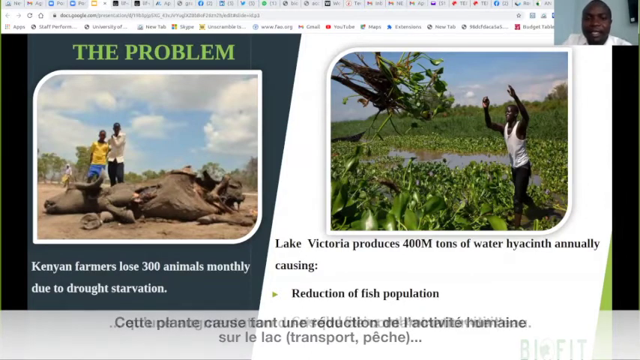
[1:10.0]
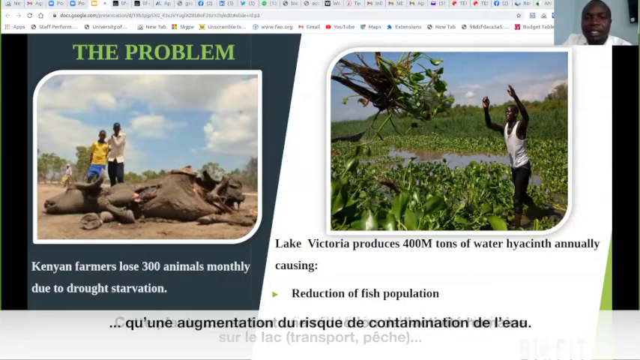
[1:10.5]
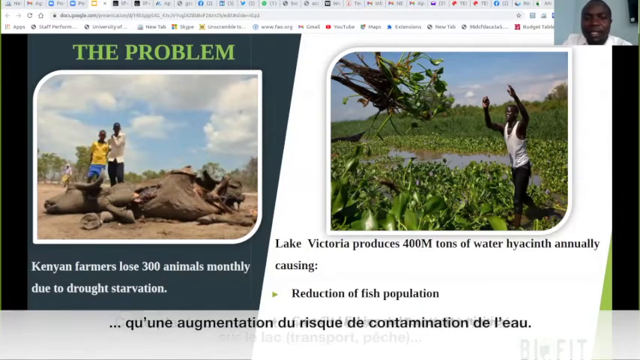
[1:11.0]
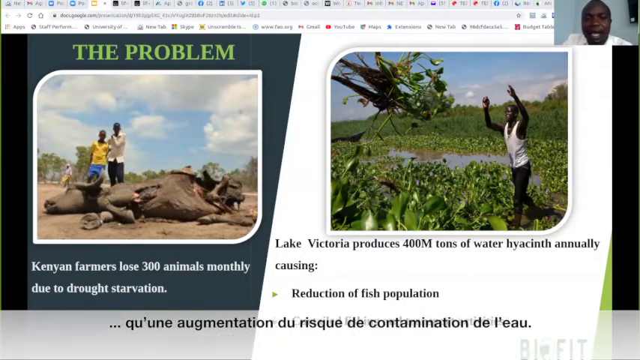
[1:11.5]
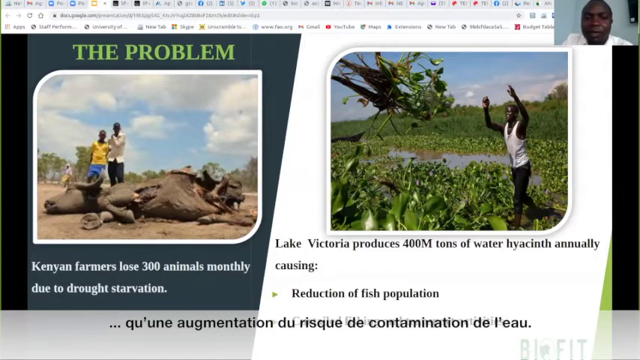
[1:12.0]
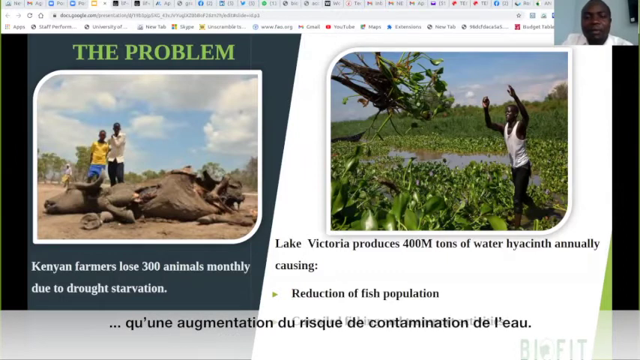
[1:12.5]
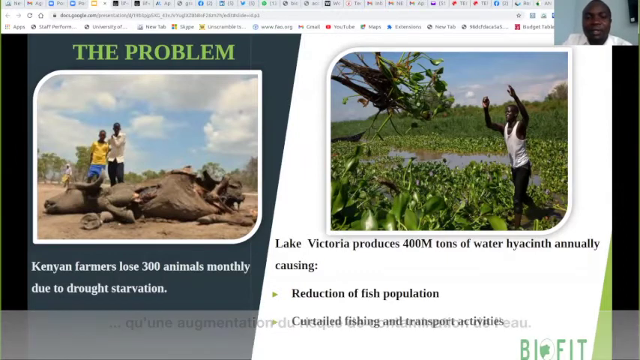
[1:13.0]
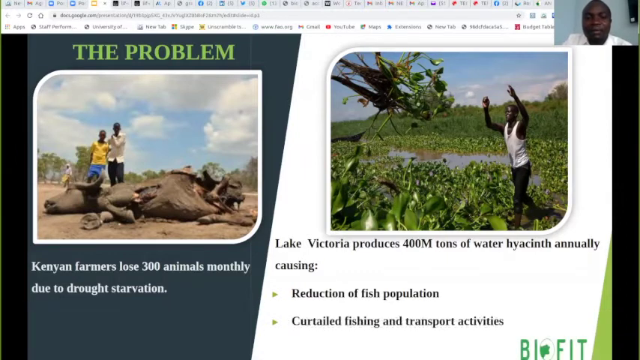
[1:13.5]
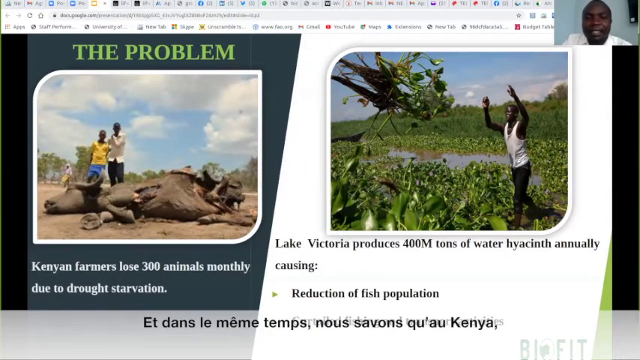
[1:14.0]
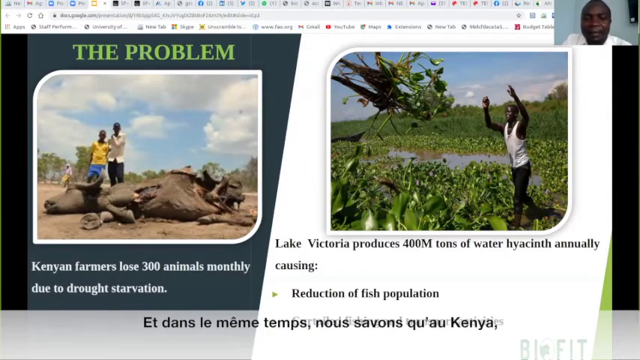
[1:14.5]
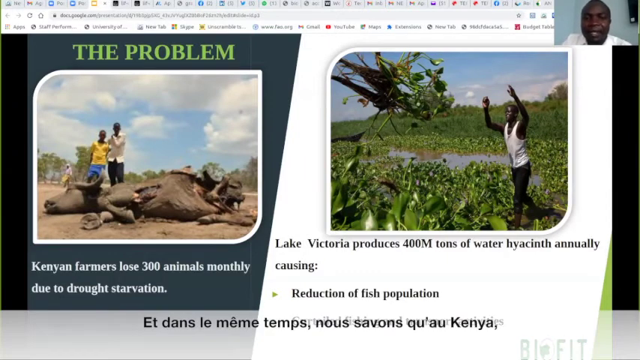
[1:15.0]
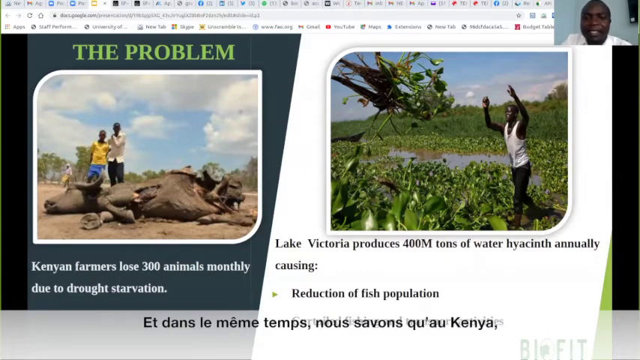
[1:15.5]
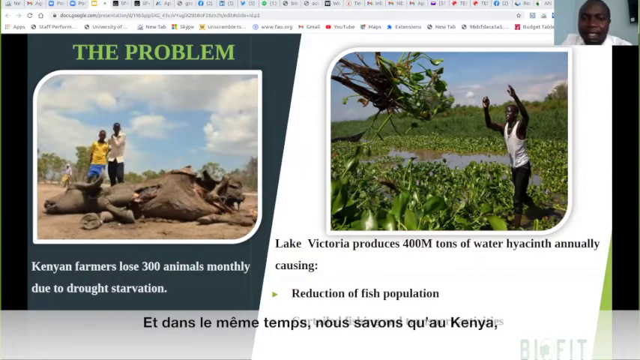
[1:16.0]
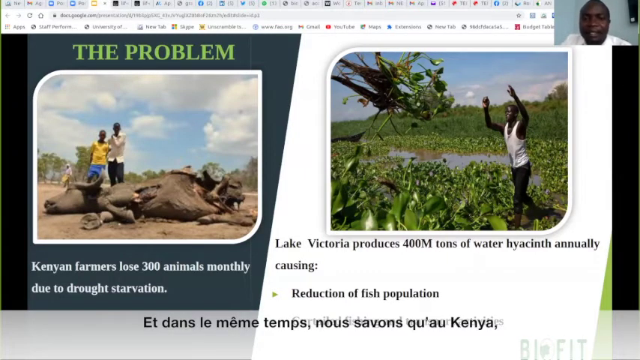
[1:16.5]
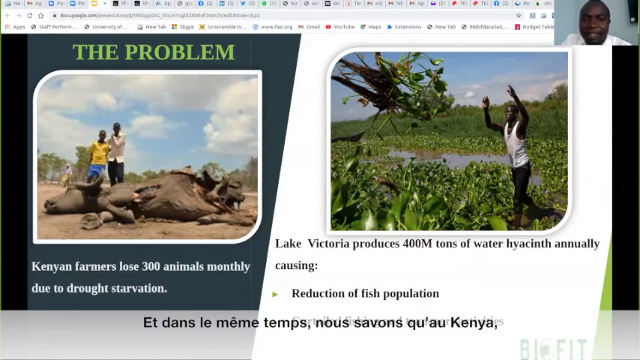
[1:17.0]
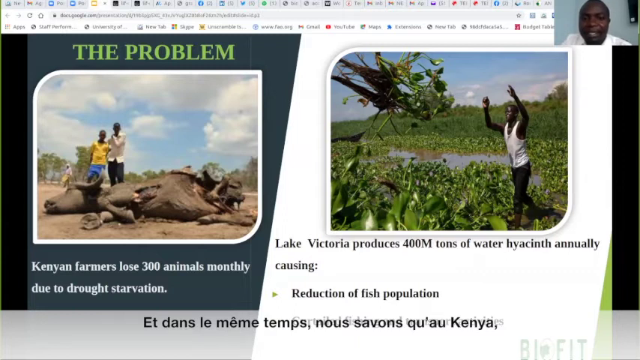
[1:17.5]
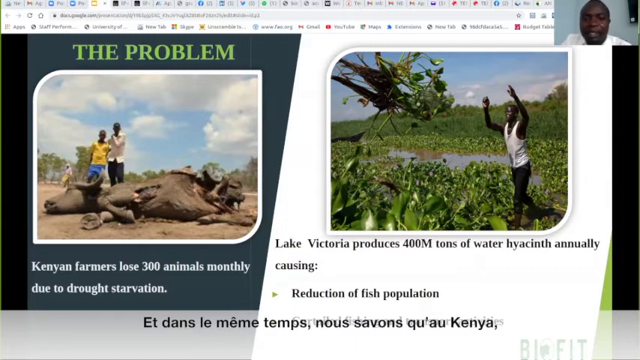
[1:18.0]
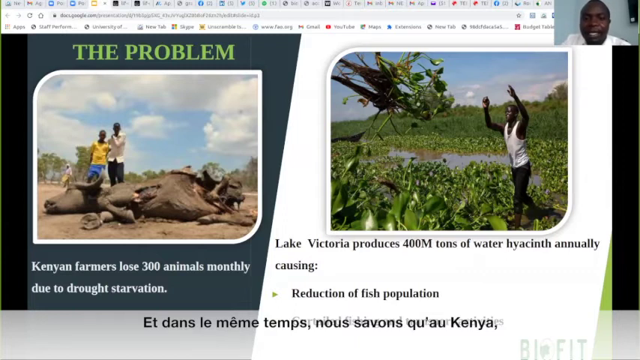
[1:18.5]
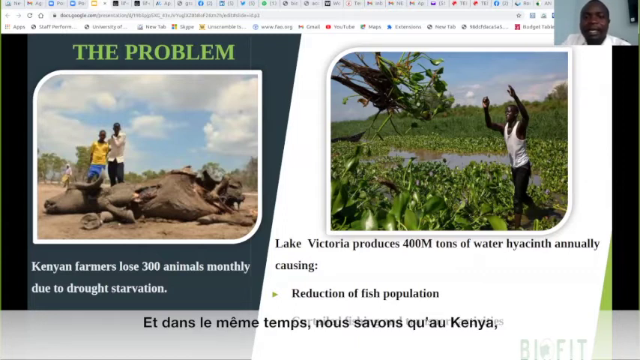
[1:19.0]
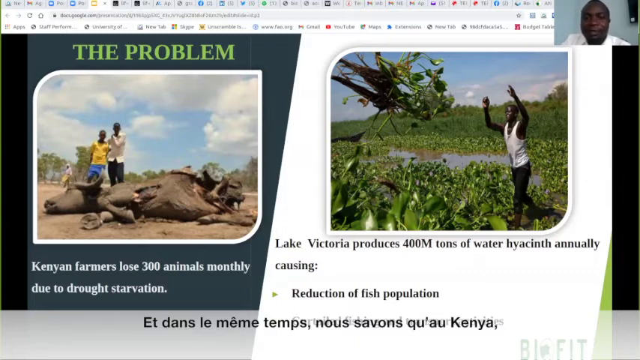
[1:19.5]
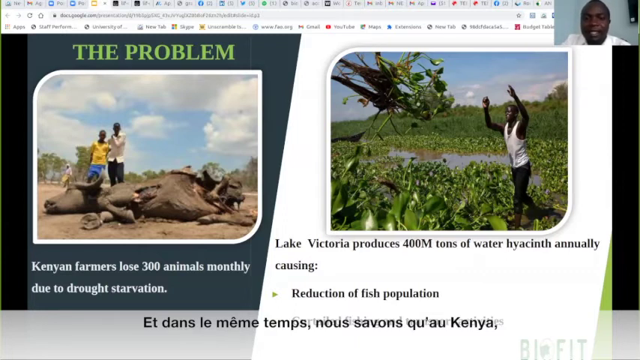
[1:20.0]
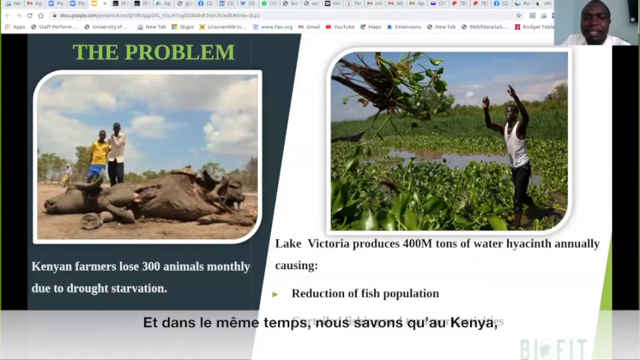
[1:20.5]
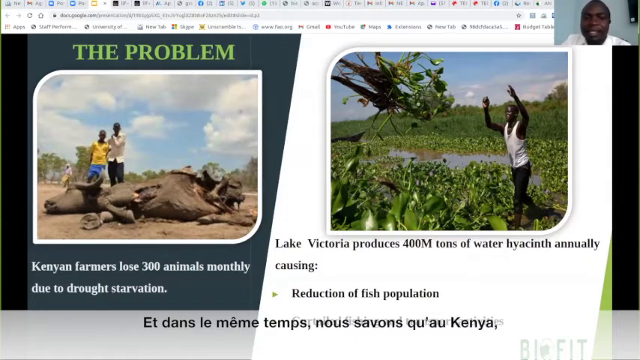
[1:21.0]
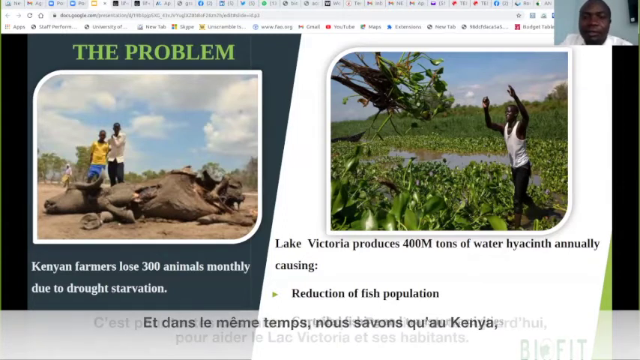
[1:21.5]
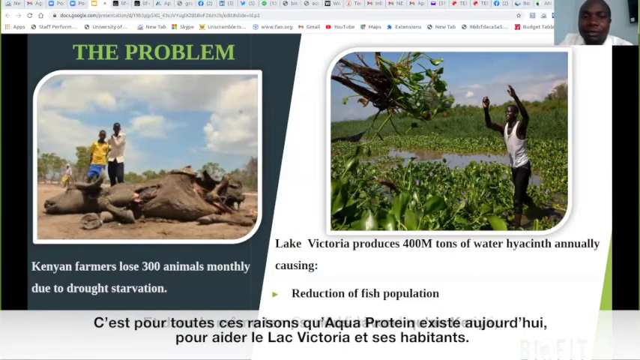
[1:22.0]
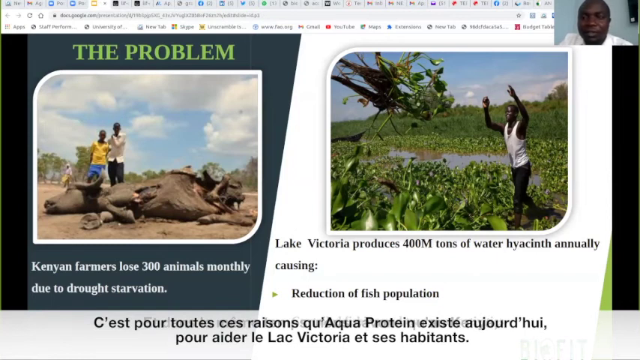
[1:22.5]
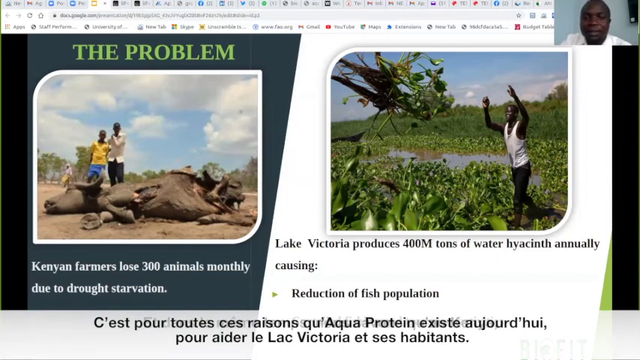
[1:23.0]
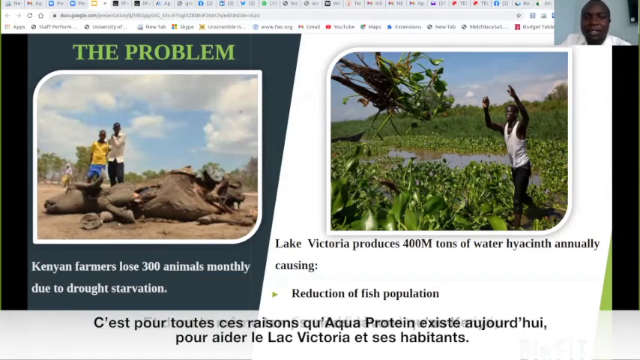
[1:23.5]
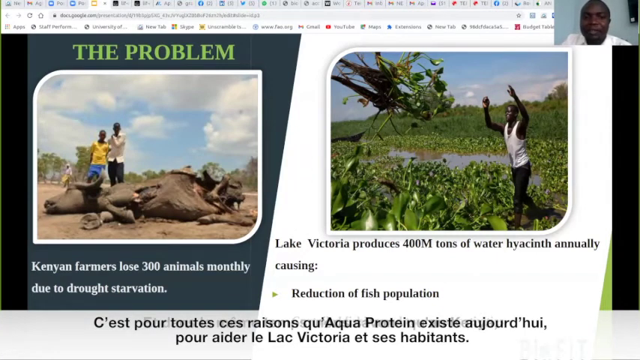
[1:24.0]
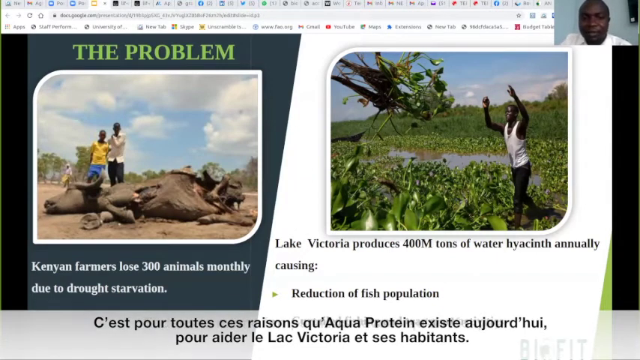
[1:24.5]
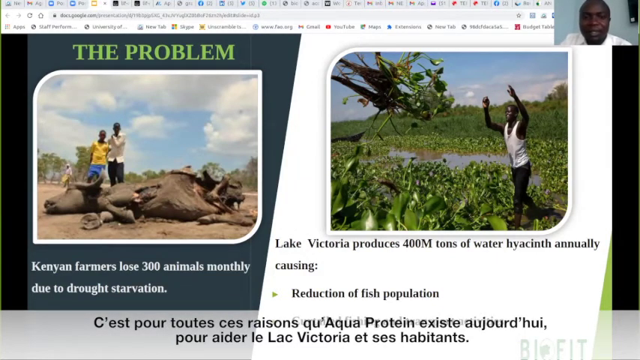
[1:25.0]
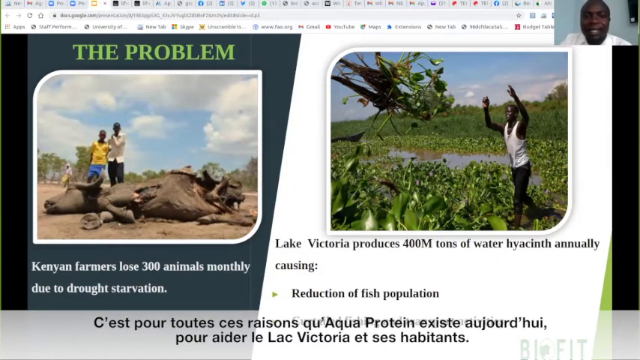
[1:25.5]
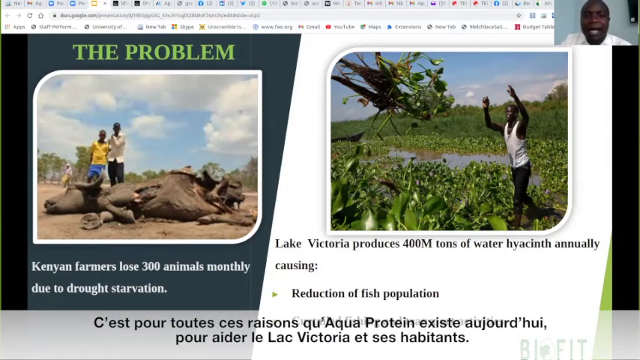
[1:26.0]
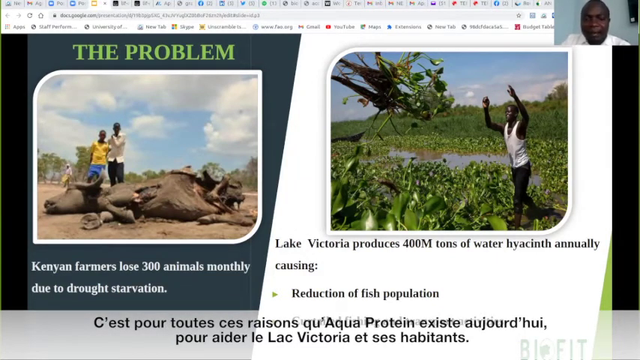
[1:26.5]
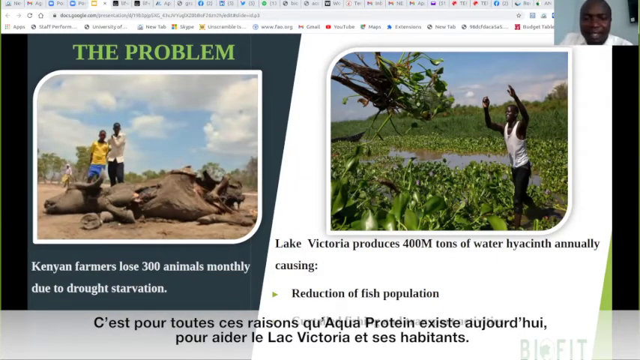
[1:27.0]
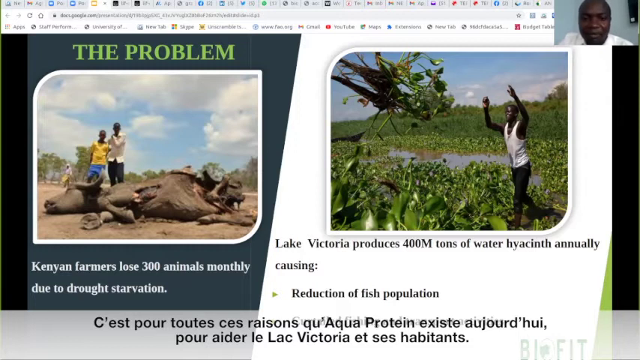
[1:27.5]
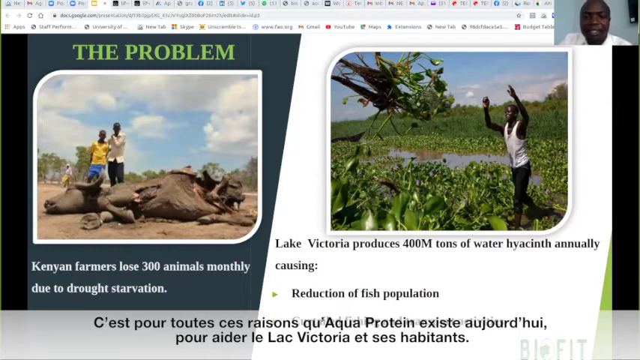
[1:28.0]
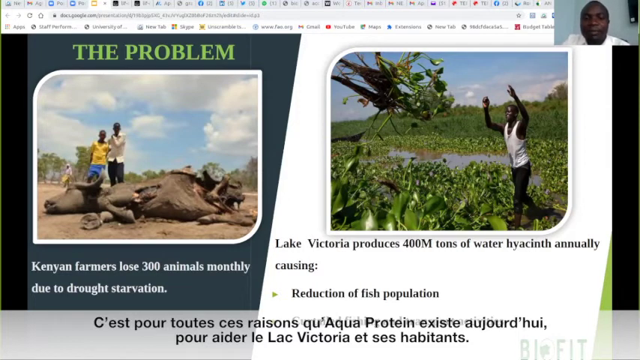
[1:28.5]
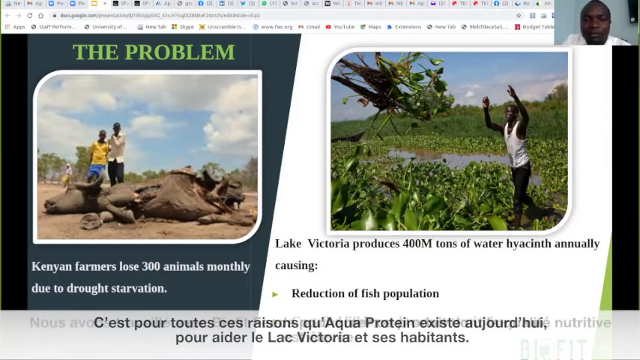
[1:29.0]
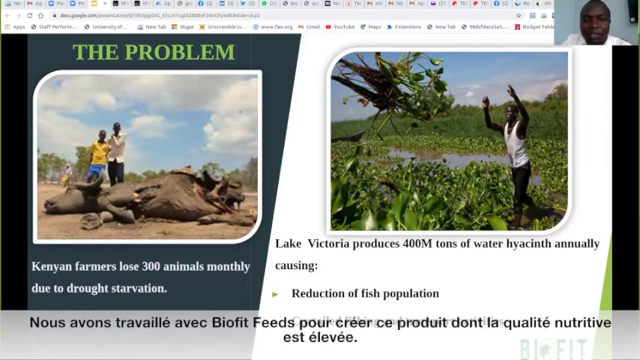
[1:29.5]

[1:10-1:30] The slide still presents the problem. The man in the upper right-hand corner is still talking, apparently about the issue. The slide uses green on a dark blue background, and the product name stays on the slides the whole time.